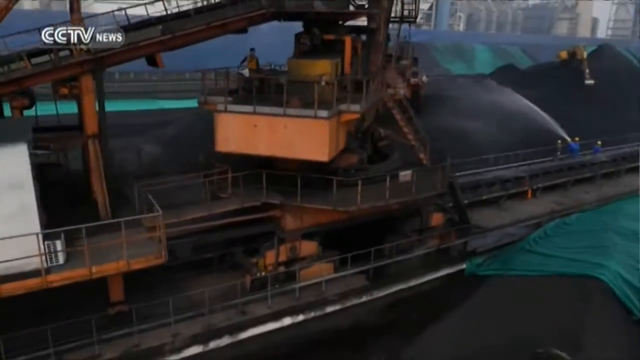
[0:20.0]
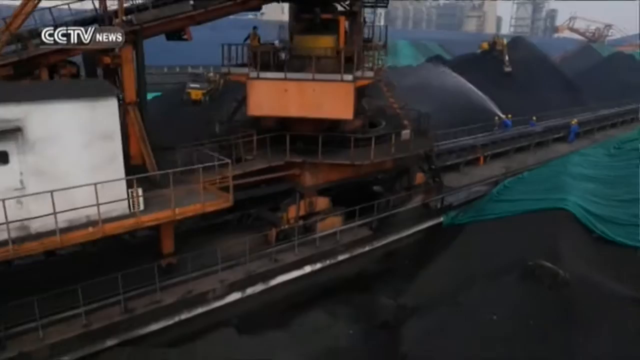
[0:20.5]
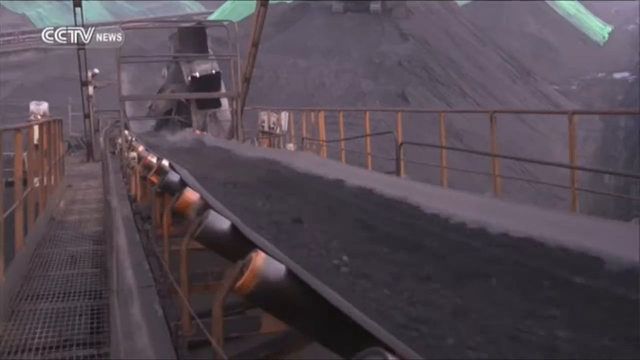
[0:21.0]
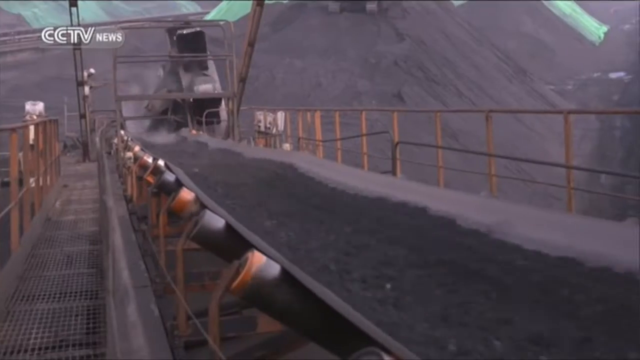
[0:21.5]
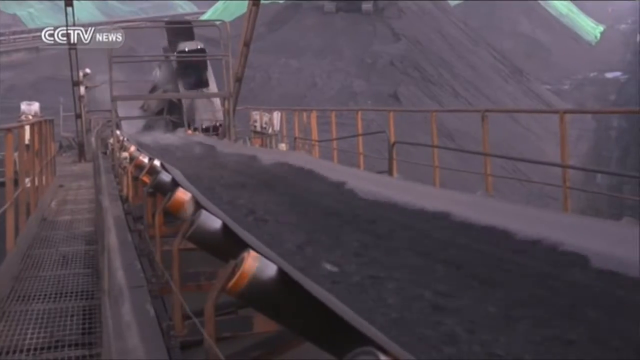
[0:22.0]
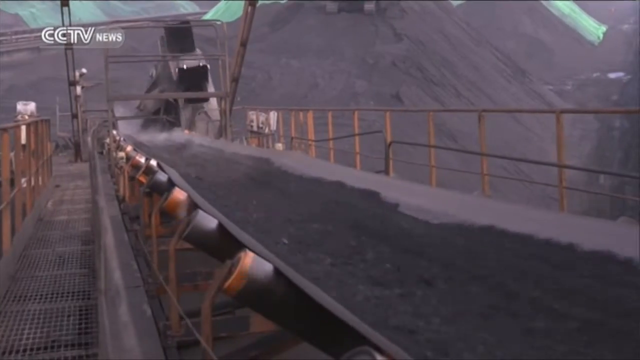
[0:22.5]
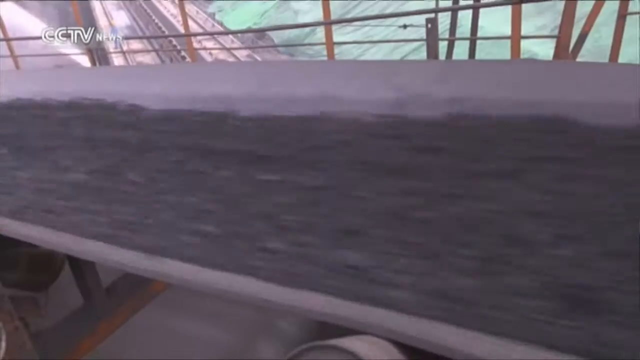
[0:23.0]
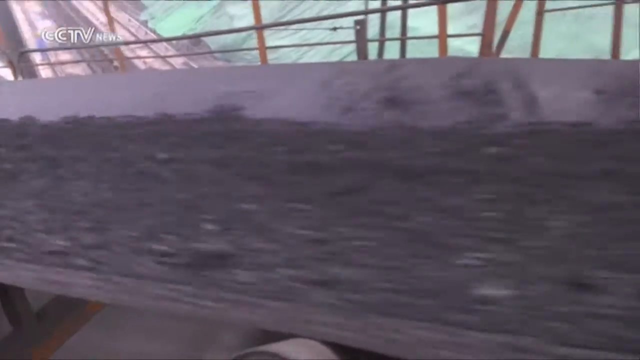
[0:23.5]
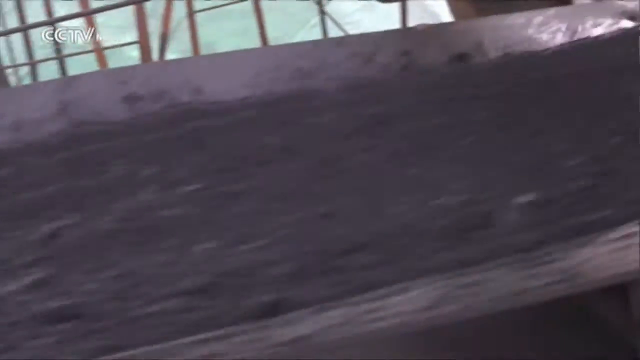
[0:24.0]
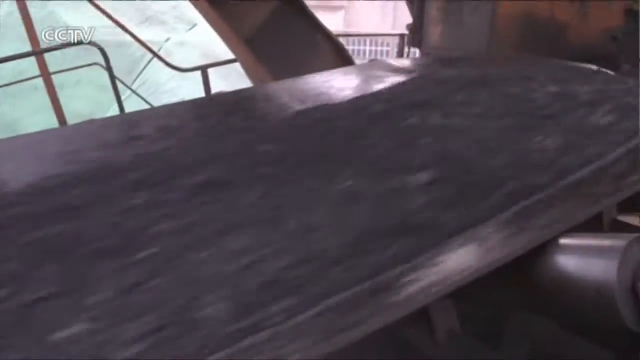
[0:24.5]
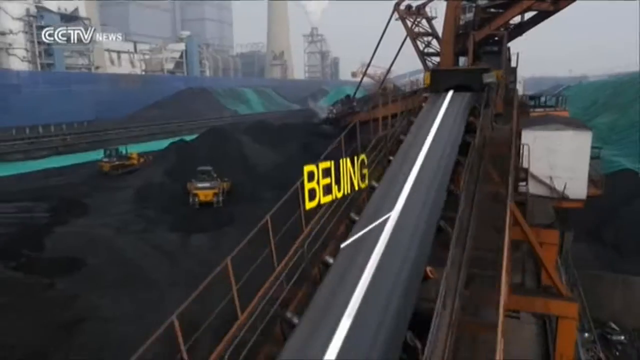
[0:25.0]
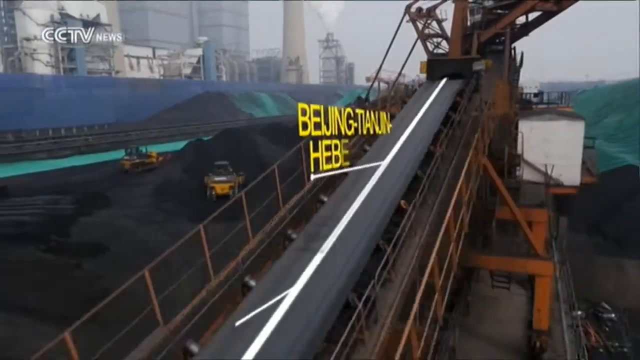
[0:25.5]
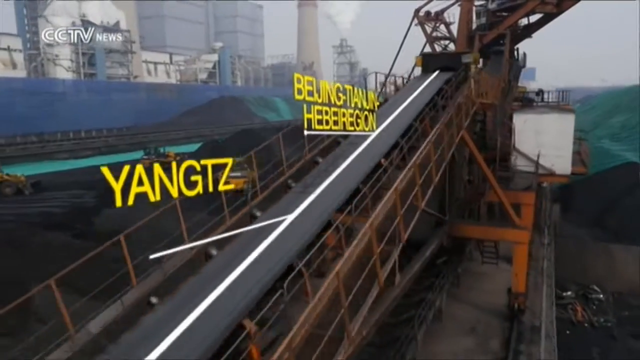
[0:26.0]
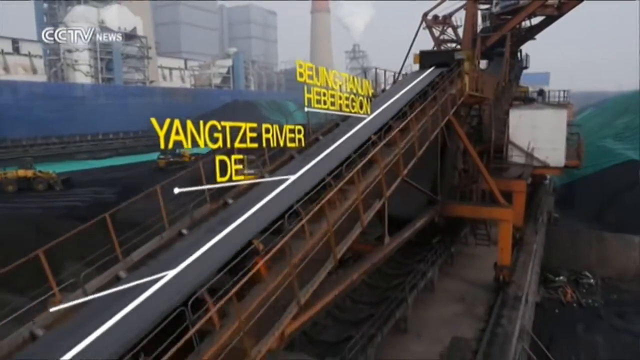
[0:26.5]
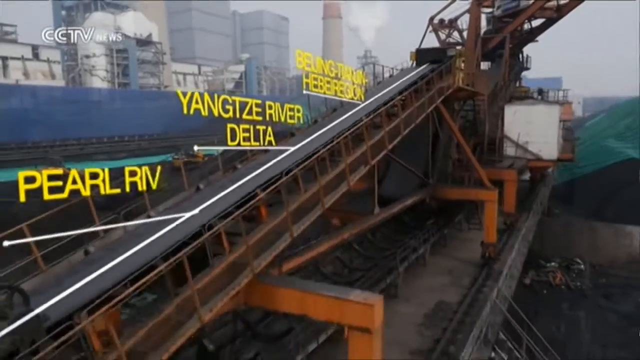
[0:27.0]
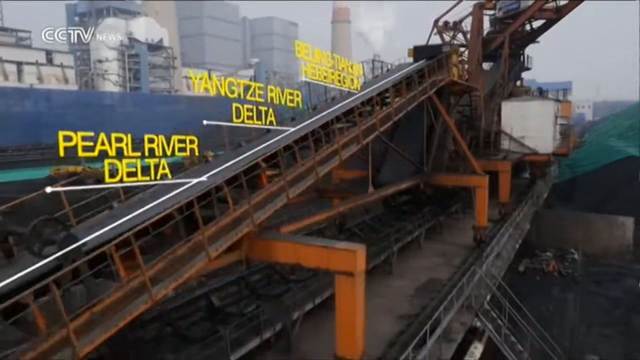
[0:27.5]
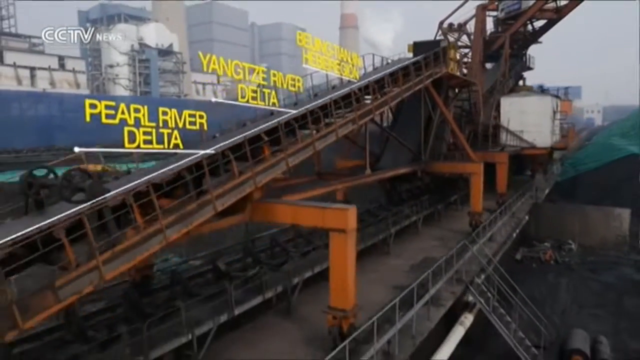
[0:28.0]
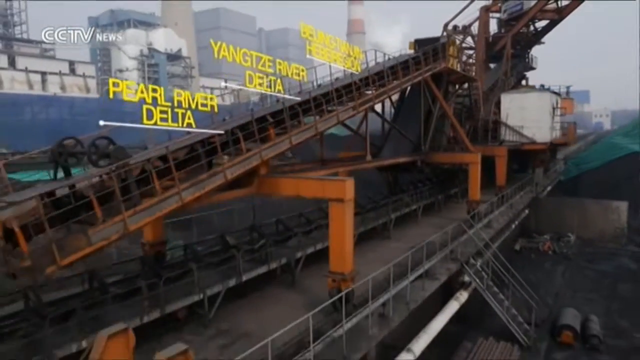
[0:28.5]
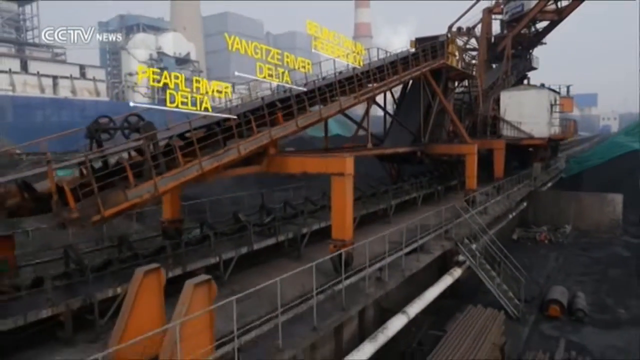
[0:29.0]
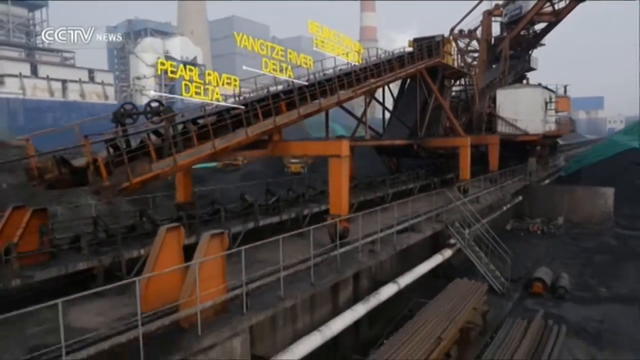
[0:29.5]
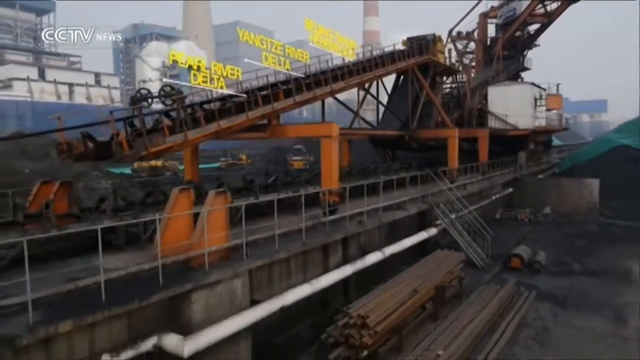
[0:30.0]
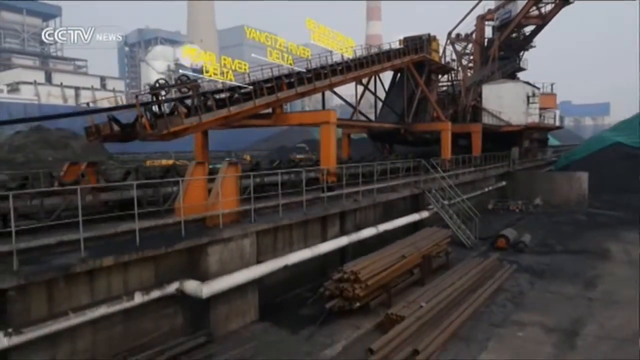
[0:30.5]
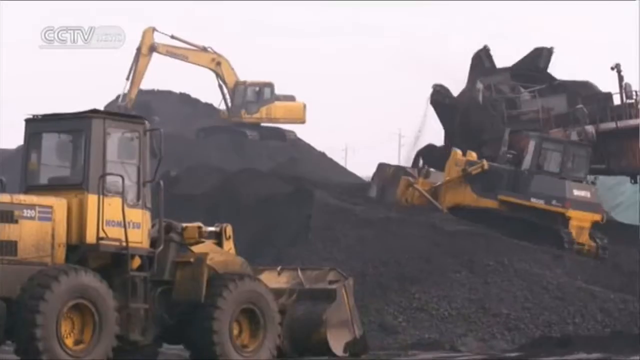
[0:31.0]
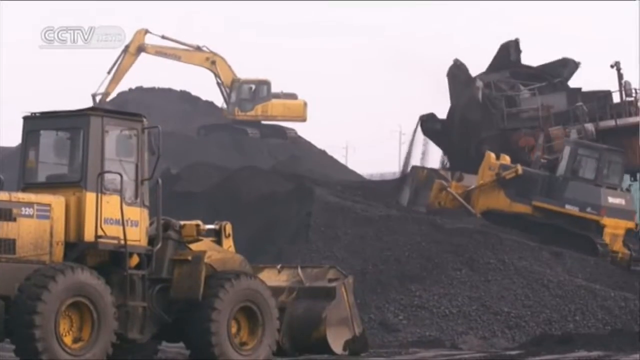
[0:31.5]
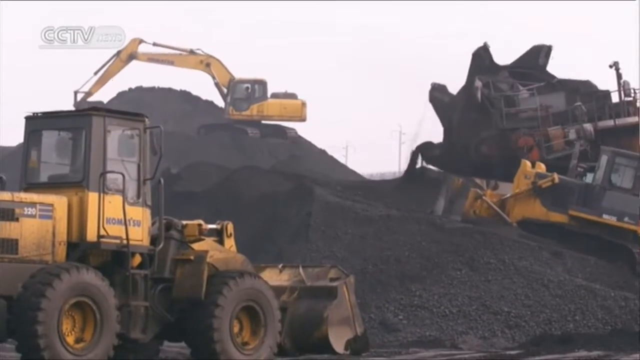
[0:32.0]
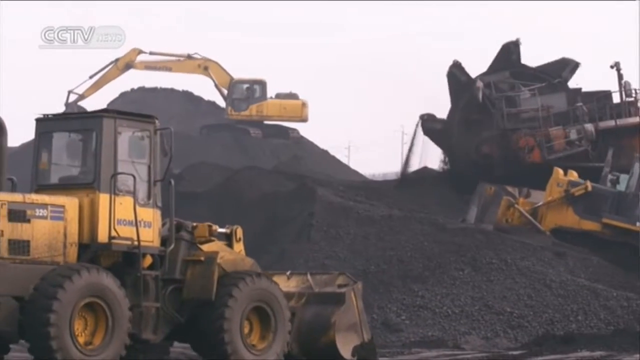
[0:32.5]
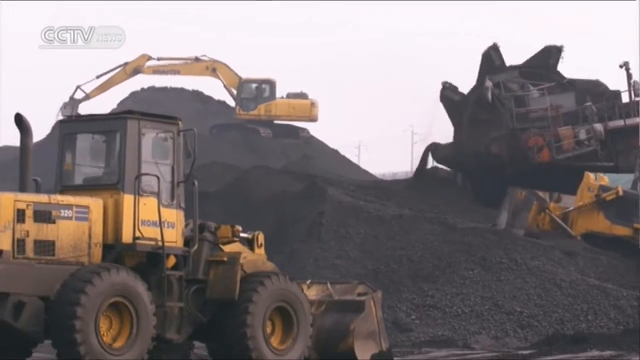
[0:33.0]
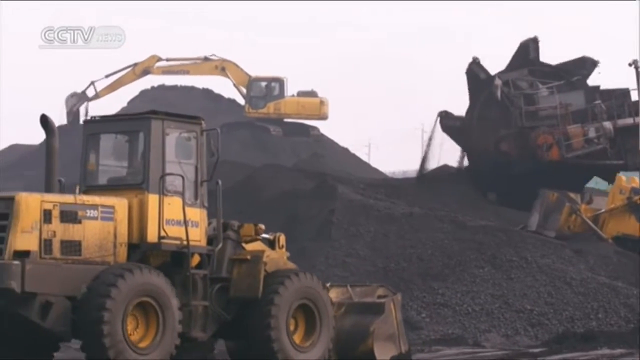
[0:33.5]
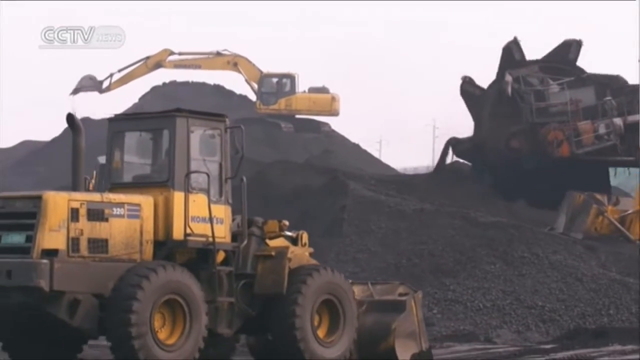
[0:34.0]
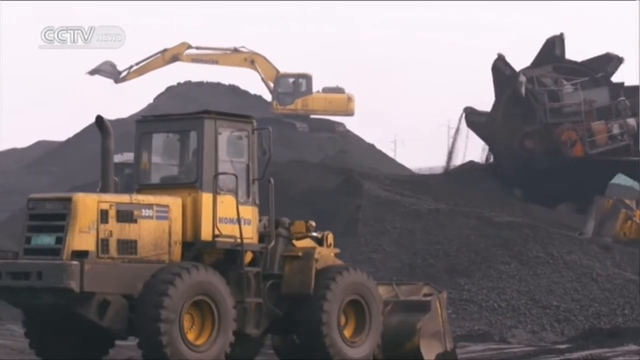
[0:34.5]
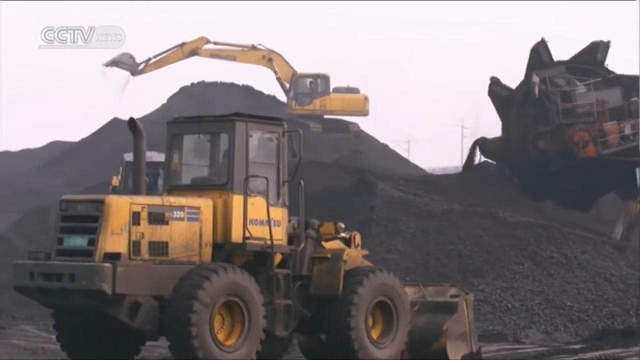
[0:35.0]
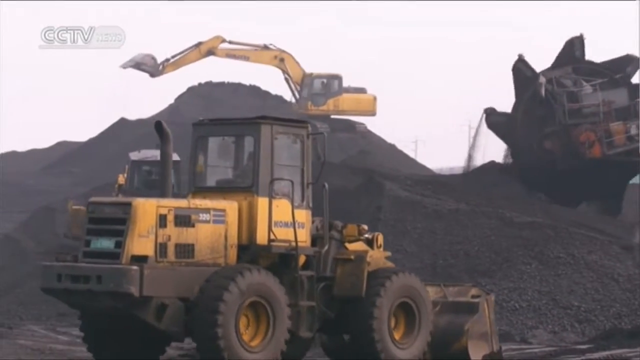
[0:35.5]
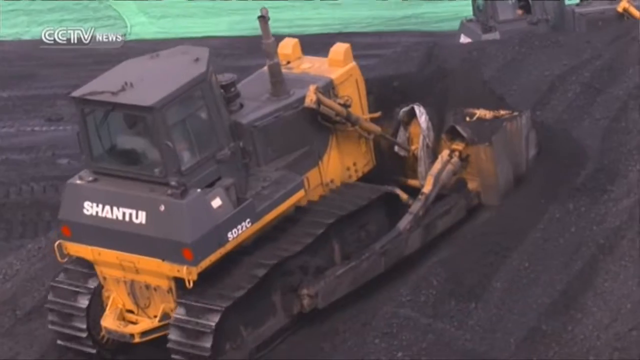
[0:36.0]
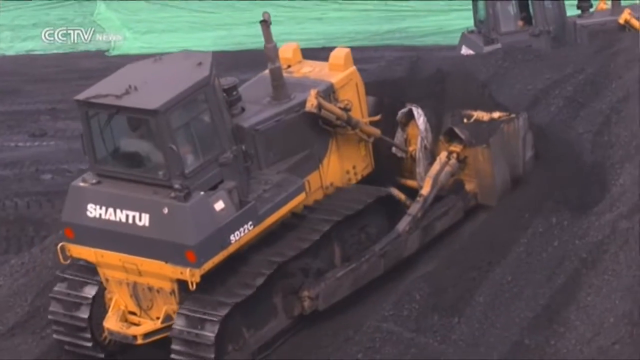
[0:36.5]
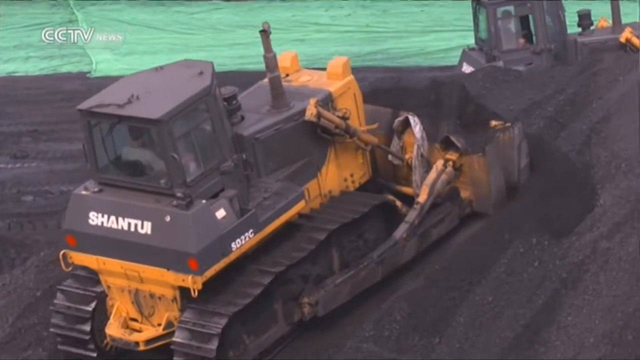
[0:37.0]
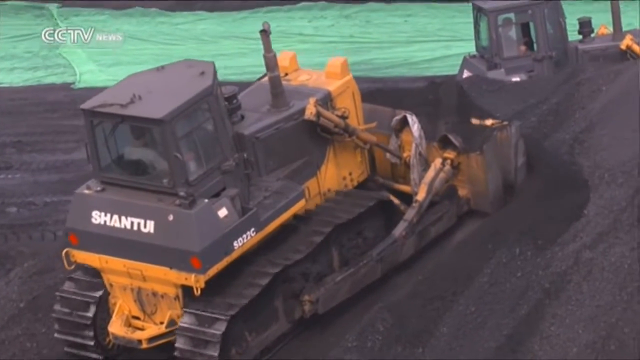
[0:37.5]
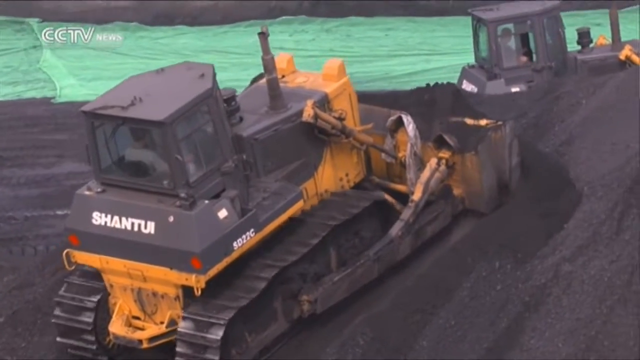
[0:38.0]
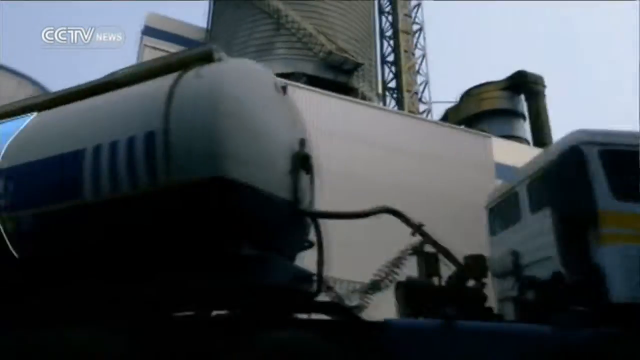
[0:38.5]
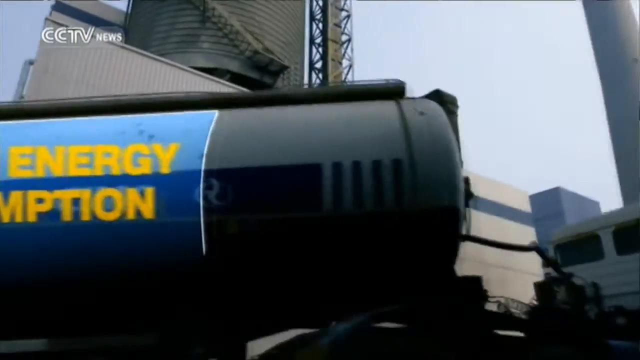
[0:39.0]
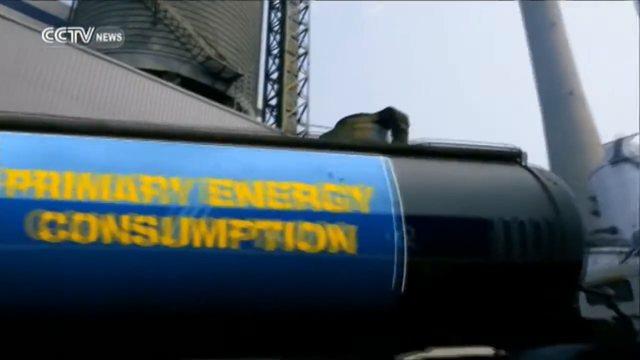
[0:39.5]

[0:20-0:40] A close-up of a boat shows water moving, and text reads "Beijing, Hebei region, Yangtze River Delta, Pearl River Delta." A bridge is seen at an angle. Outdoor machines move dirt around: one spins the dirt, while cranes lift the dirt and move it to other areas, swinging side to side and back and forth. A truck has "primary energy consumption" on it. Big green tarps are on the ground, and two men in blue with white construction hats hose the dirt down. Yellow text lists the Beijing and Hebei region, "Yangtze River Delta," and "Pearl River Delta."